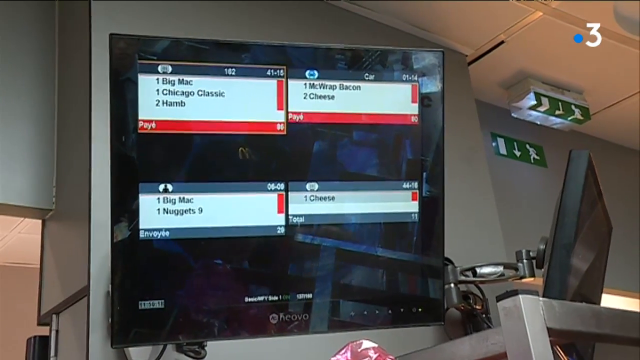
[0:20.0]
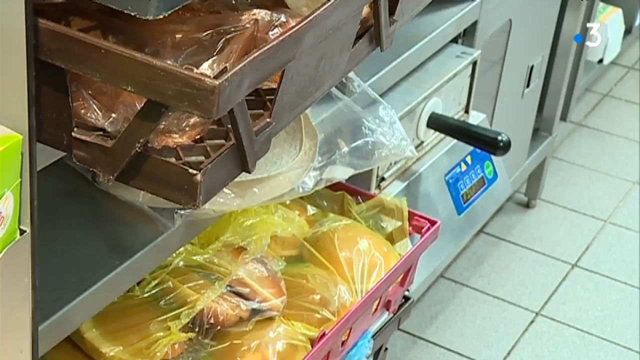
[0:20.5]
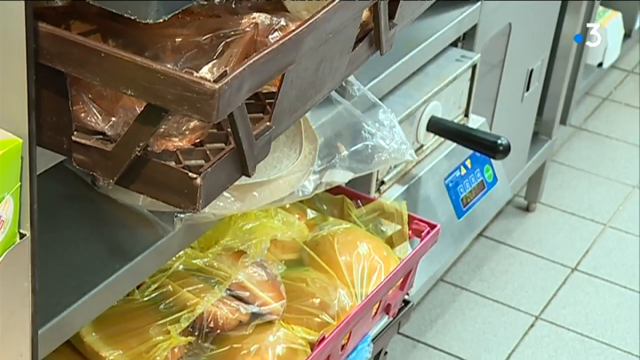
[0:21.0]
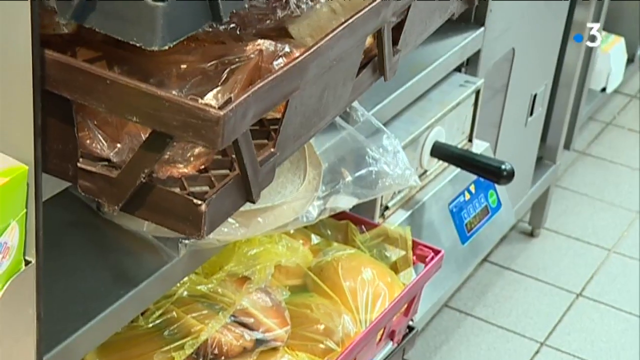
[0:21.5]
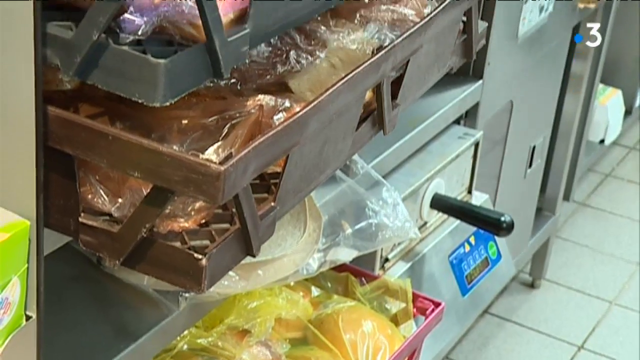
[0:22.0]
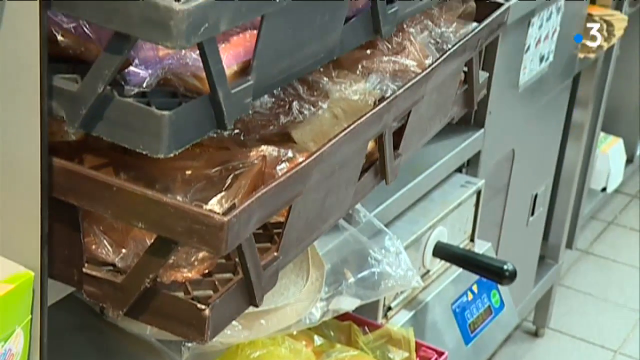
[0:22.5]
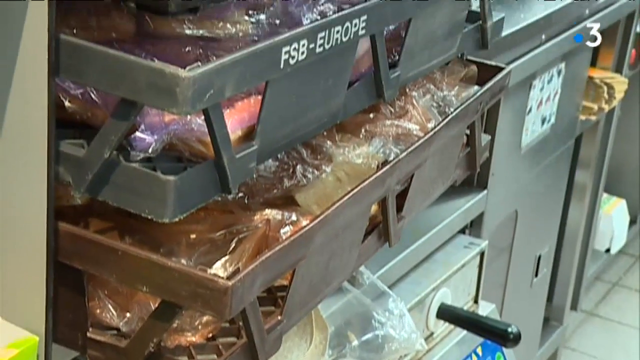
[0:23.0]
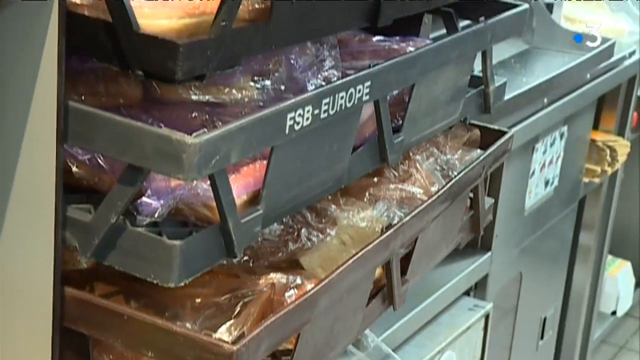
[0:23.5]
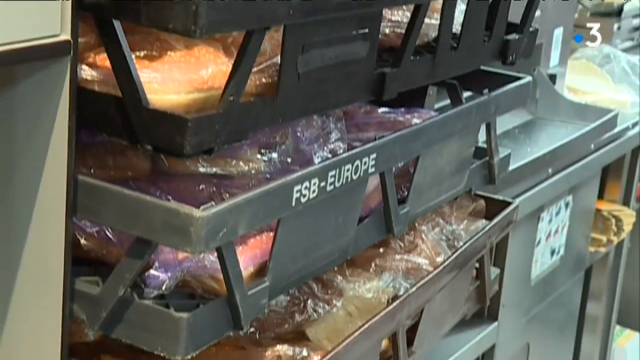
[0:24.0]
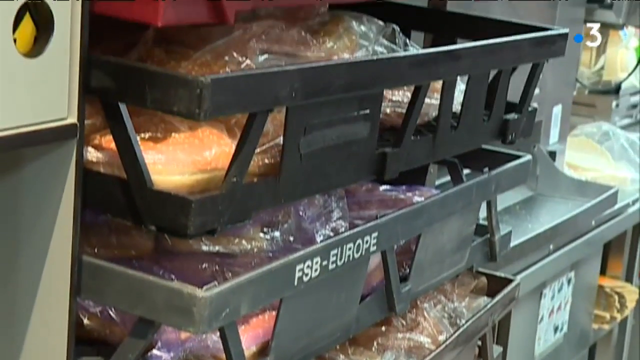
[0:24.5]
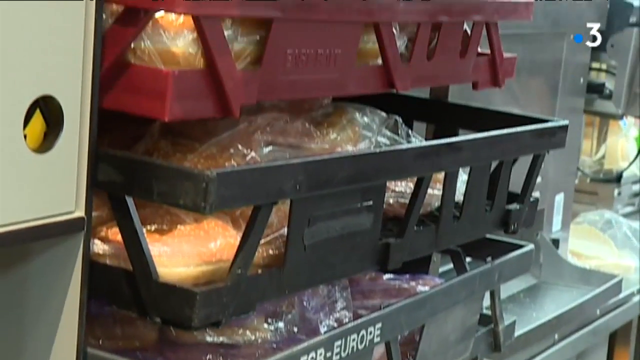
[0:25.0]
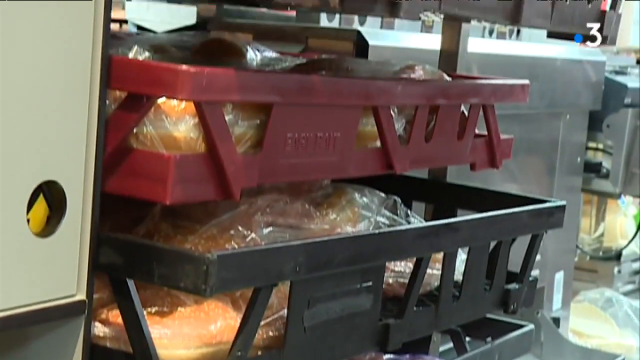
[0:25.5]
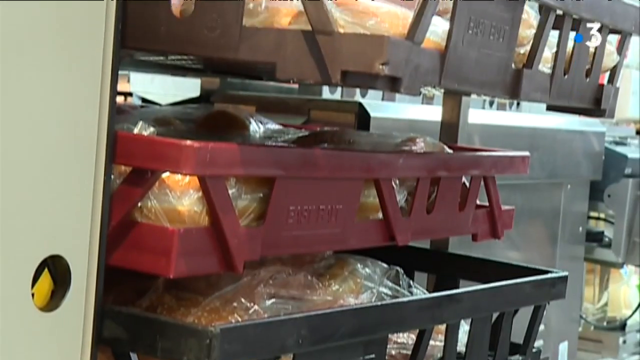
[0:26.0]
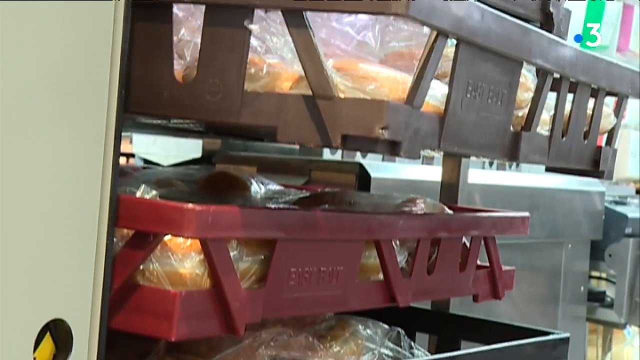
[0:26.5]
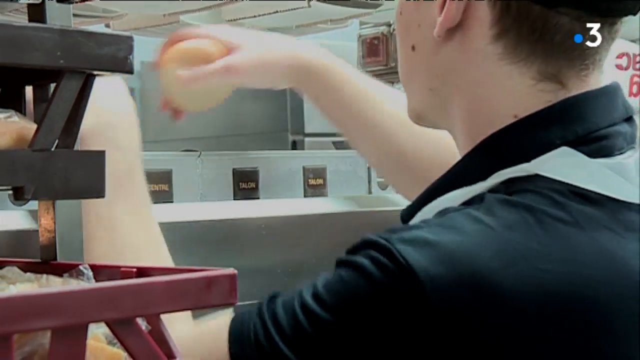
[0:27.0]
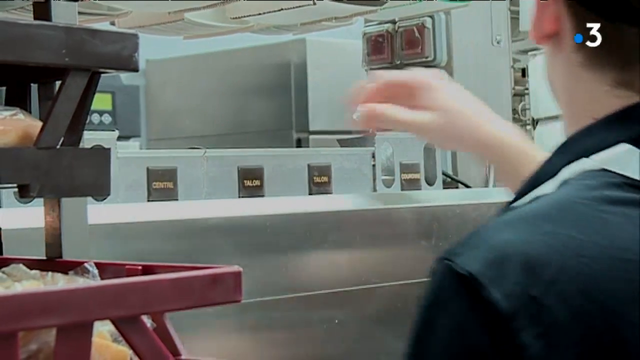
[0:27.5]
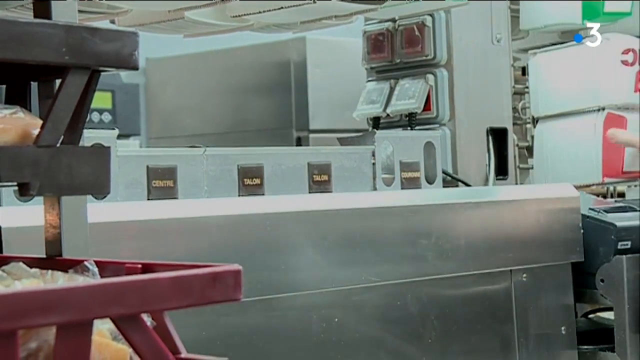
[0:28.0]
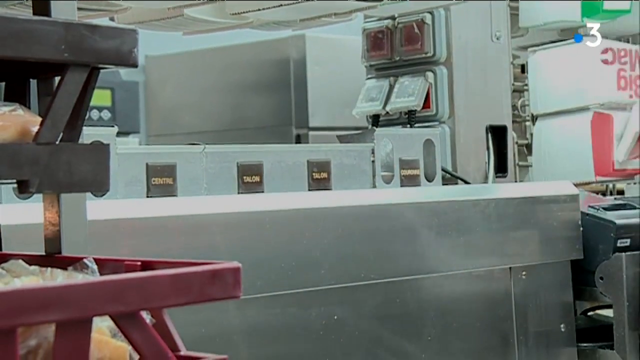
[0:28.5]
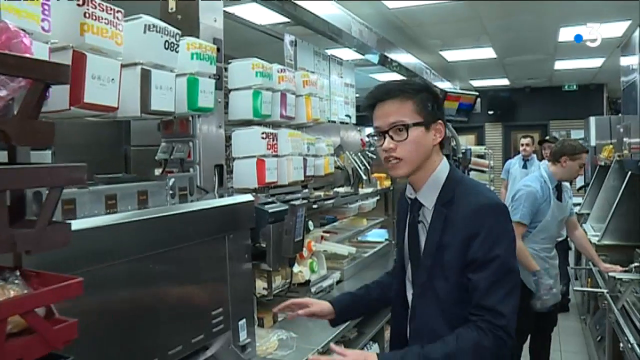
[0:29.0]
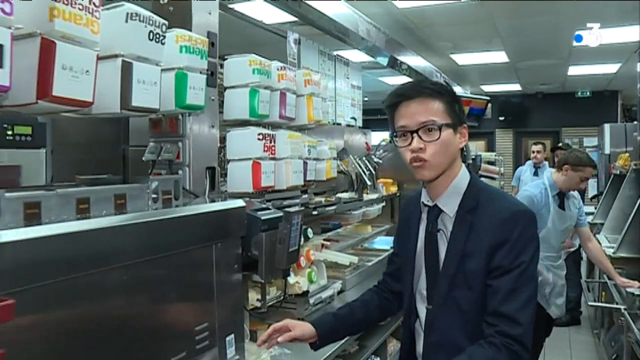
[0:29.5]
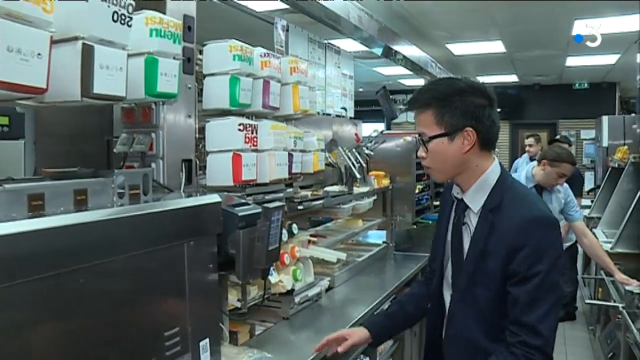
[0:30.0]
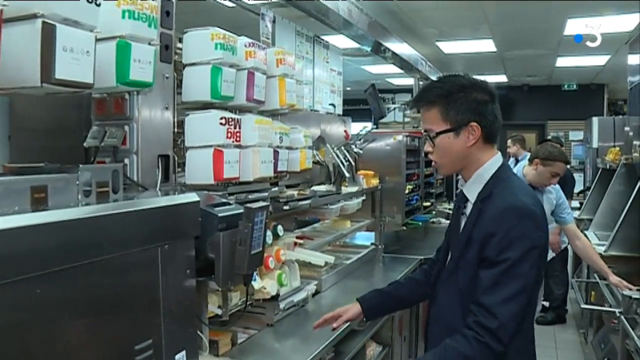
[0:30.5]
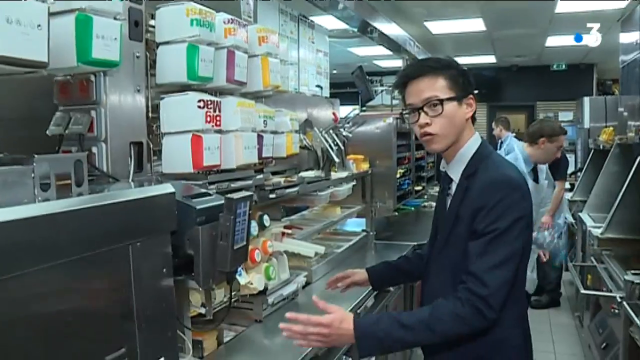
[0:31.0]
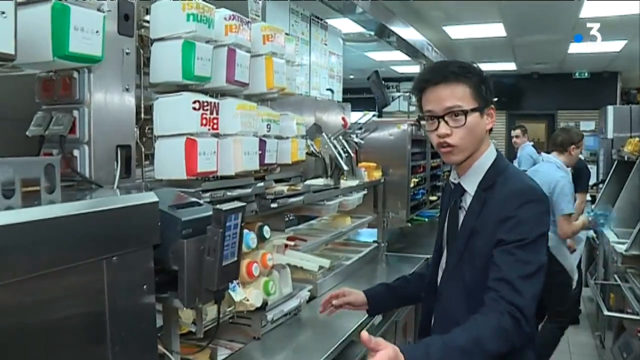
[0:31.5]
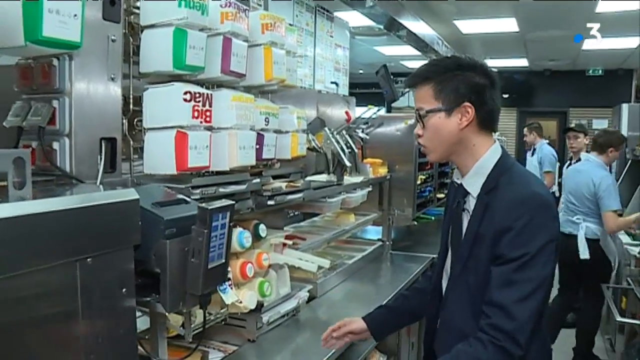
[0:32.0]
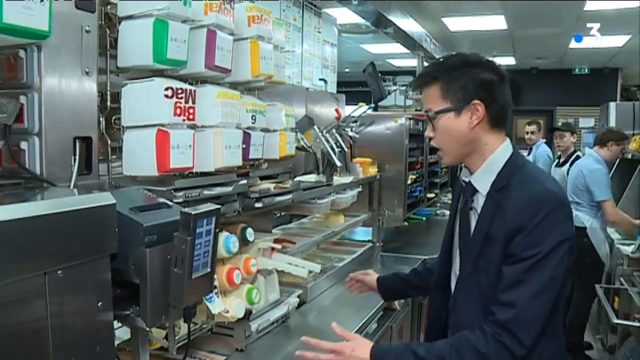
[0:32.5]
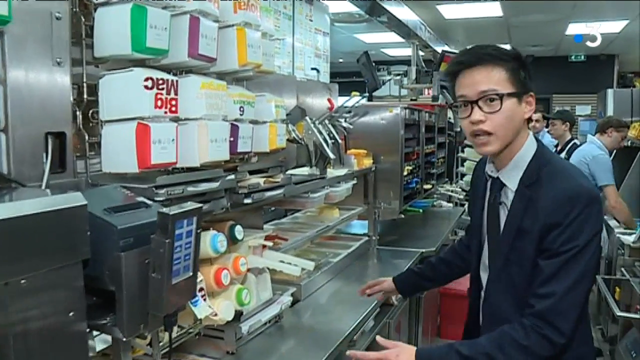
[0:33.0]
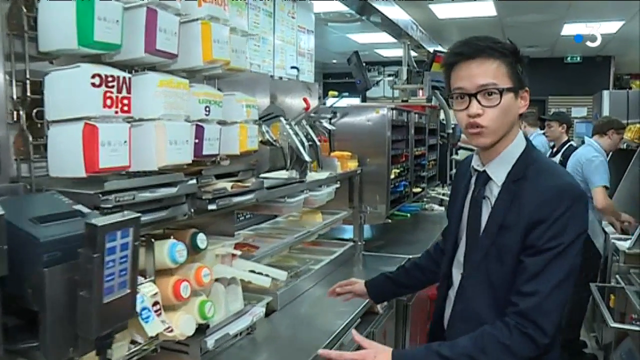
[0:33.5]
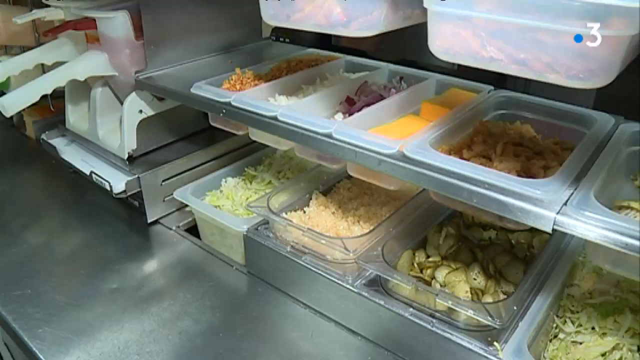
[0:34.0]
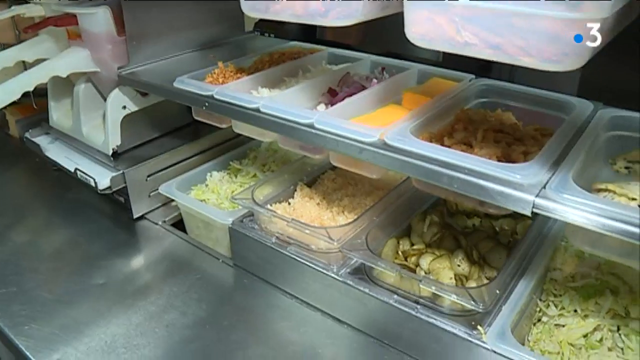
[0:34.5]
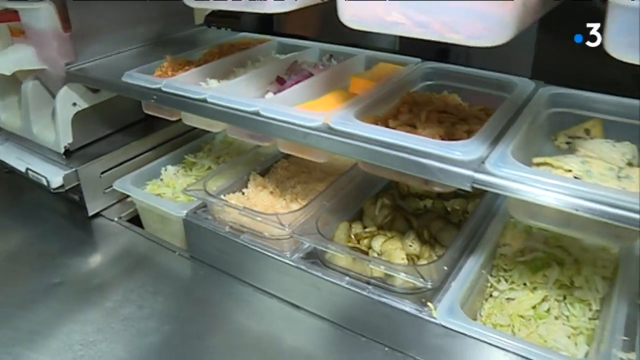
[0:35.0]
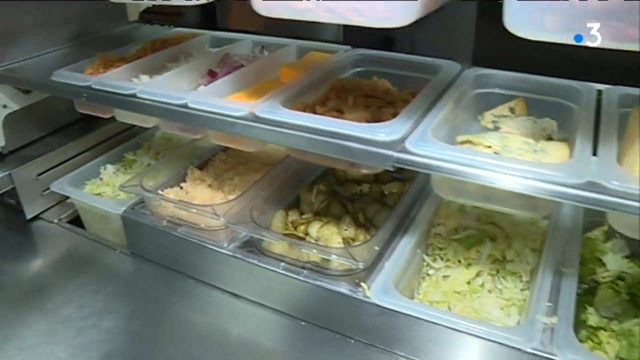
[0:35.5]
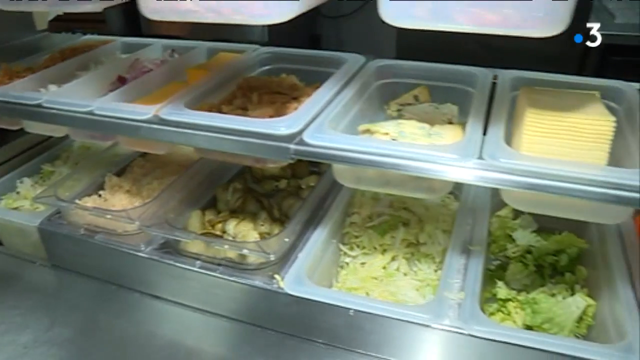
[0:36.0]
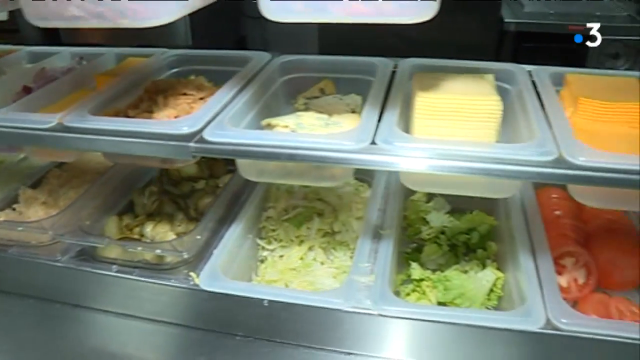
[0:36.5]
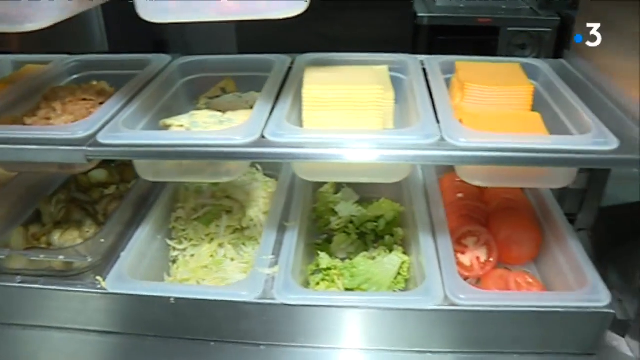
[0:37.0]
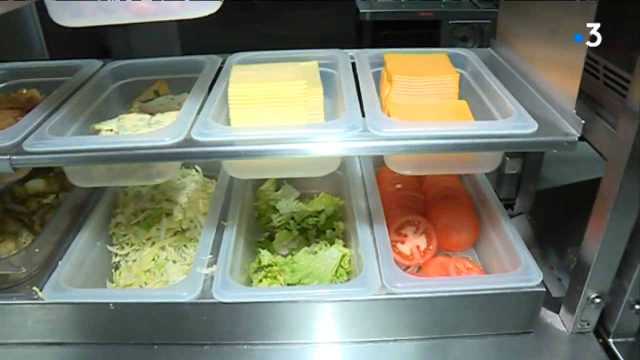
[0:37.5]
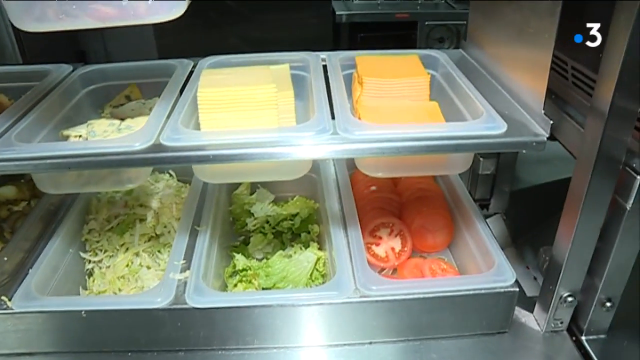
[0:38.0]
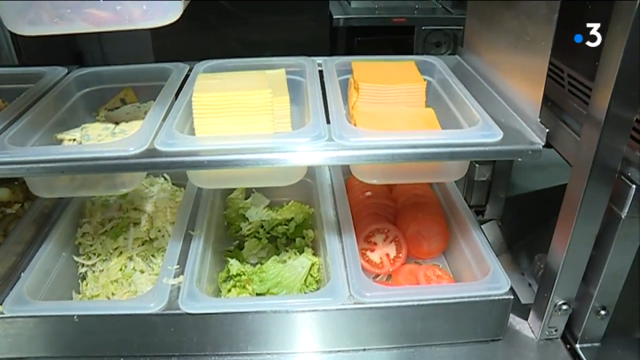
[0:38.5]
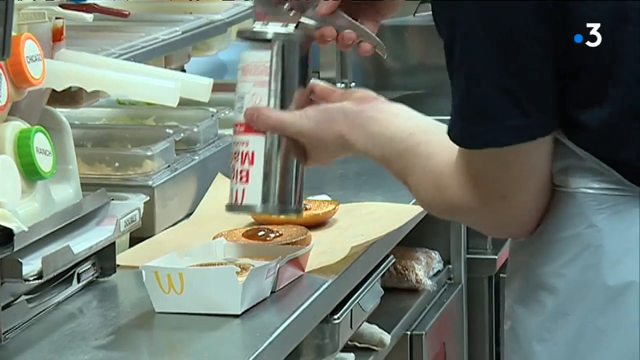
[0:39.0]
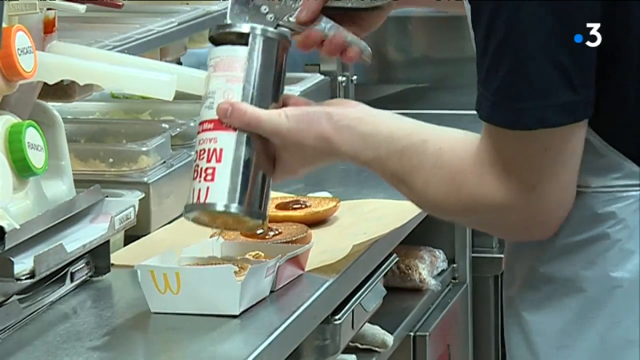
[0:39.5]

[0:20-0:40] Close-ups show food in a McDonald's kitchen: a tray with what look like buns and another tray above it with what look like meat patties. One of the trays has "Europe" written on its side. The view continues up through trays of different colors, some red and some black, each containing food; they appear to be mounted on a wall. The shot switches to another piece of kitchen equipment, then to a man standing in the kitchen wearing a blue jacket, a tie and a button-down shirt. He has short black hair and glasses. He speaks to the camera and appears to be describing some of the food items behind him. Above him are cartons for McDonald's food, including boxes shaped like hamburgers, one of which says "Big Mac". Next is a close-up of trays holding items for preparing sandwiches: lettuce, cheese, what looks like pickles, and sliced tomatoes. Someone begins preparing a burger on the metal kitchen countertop.